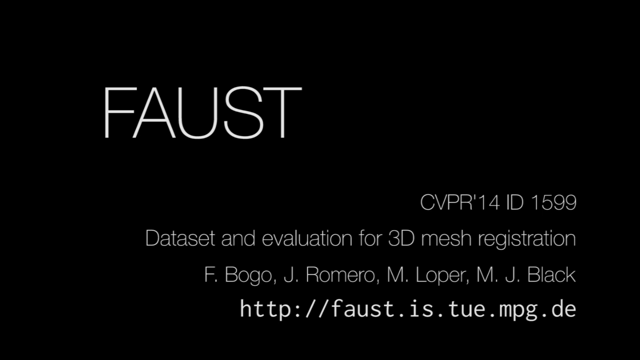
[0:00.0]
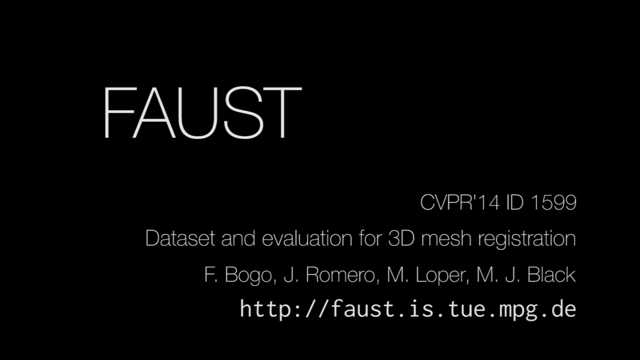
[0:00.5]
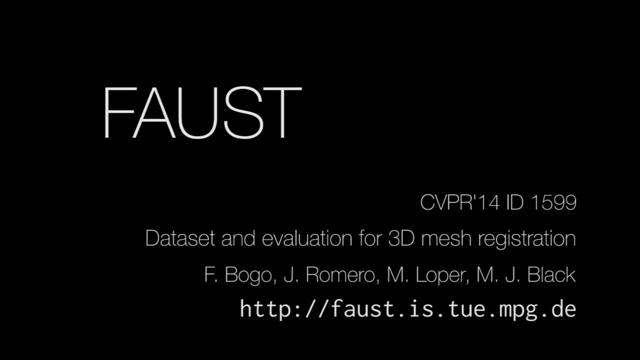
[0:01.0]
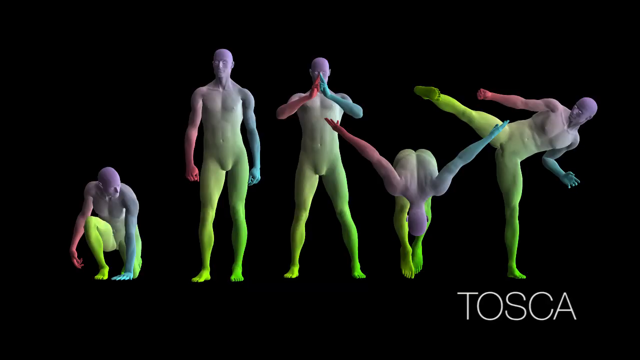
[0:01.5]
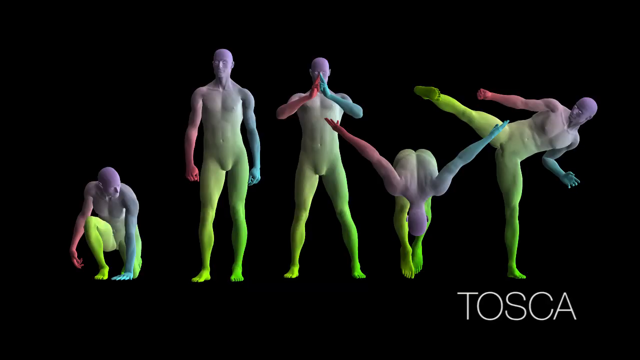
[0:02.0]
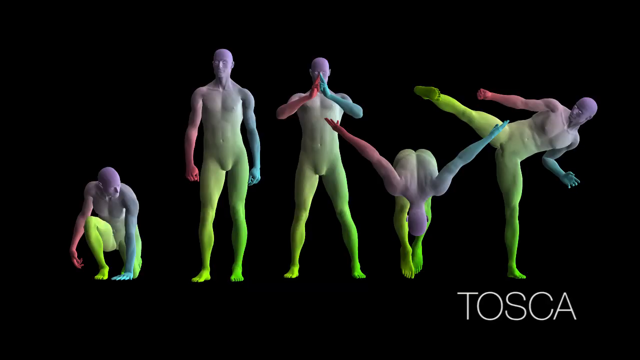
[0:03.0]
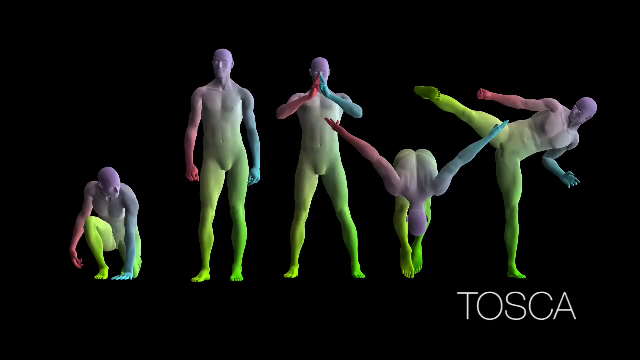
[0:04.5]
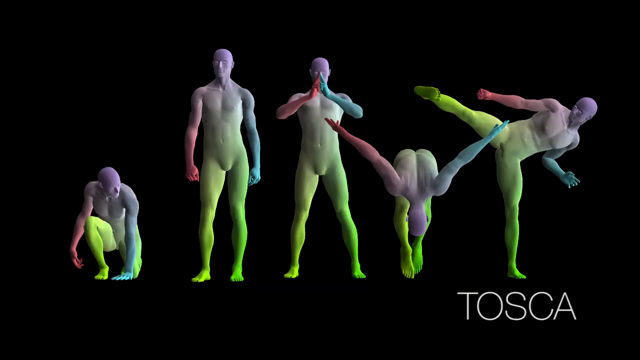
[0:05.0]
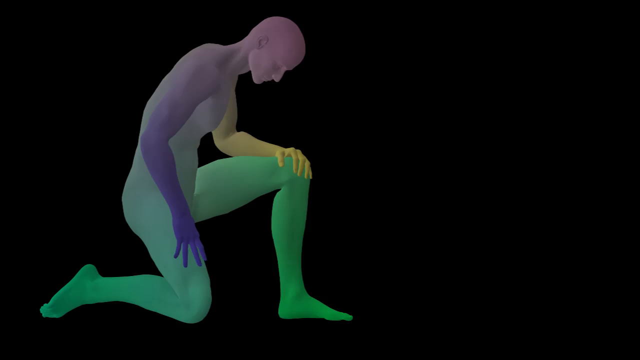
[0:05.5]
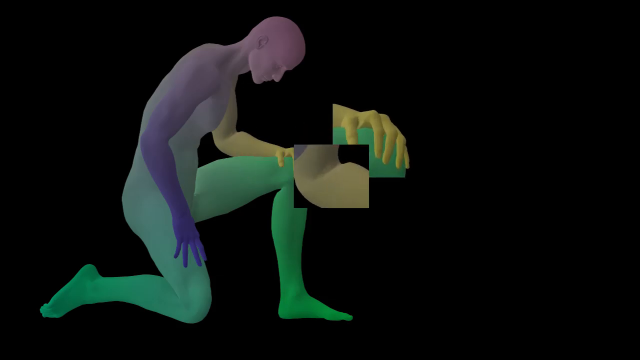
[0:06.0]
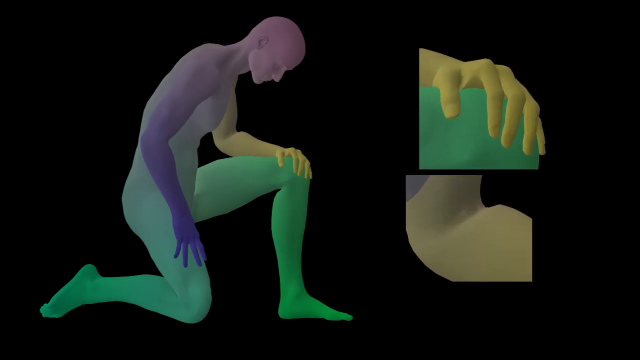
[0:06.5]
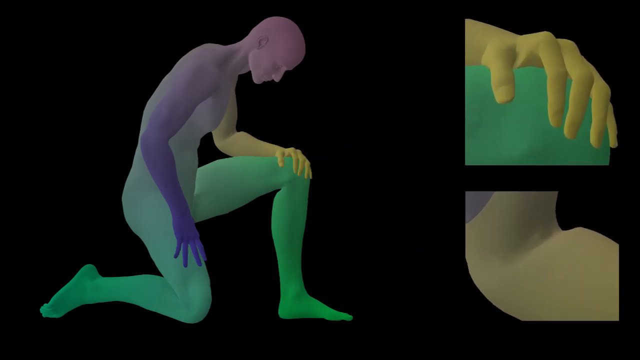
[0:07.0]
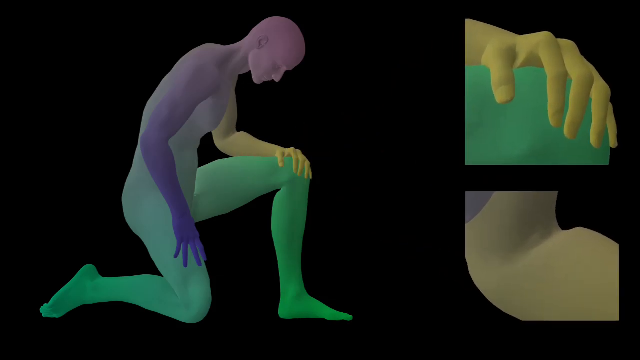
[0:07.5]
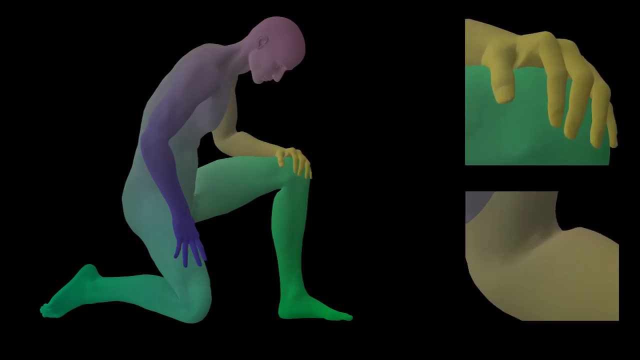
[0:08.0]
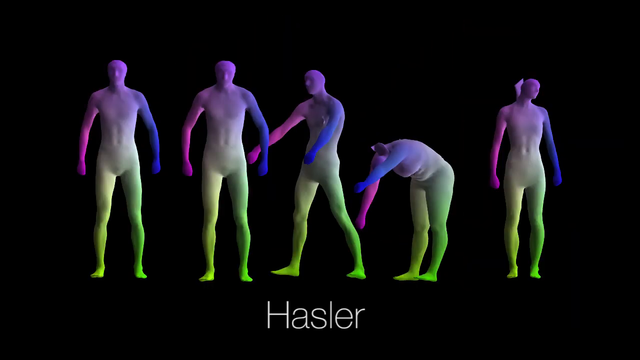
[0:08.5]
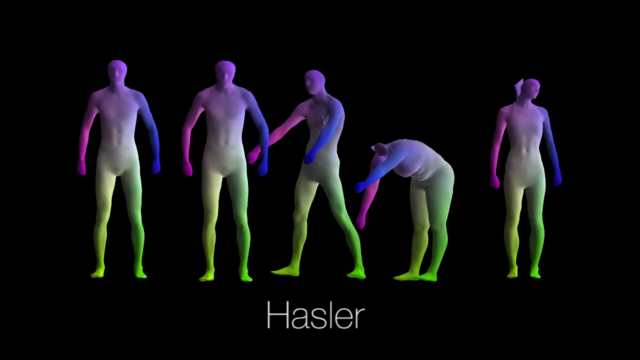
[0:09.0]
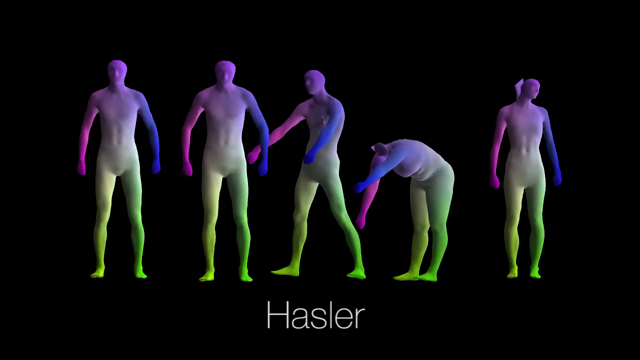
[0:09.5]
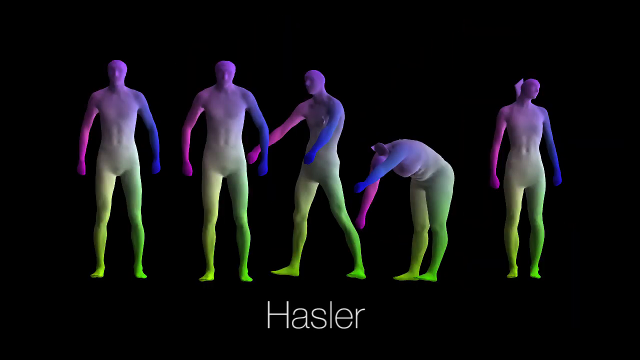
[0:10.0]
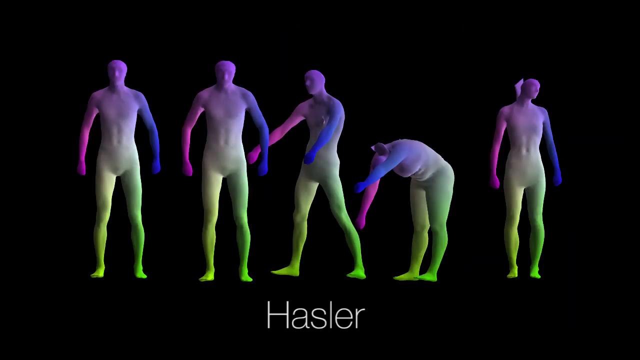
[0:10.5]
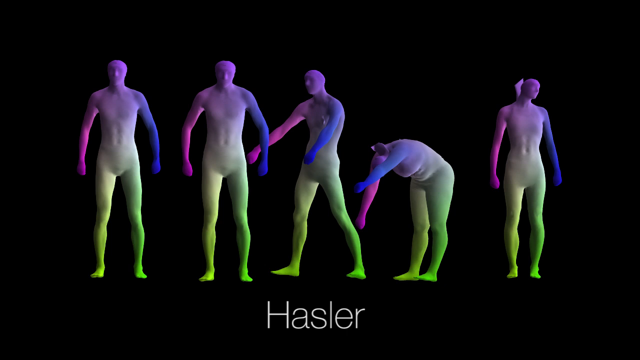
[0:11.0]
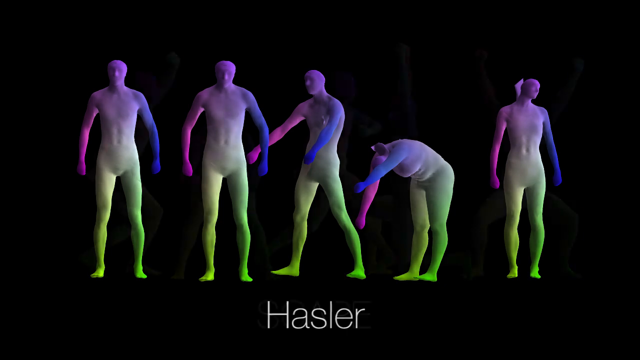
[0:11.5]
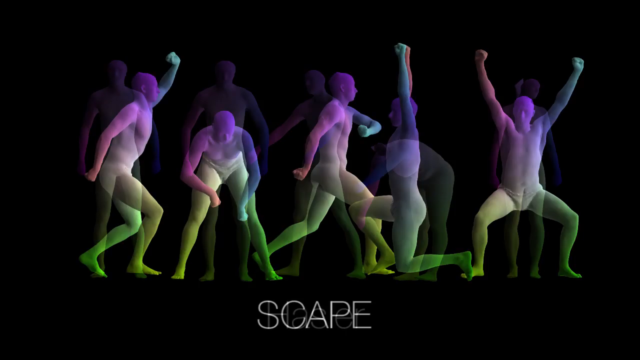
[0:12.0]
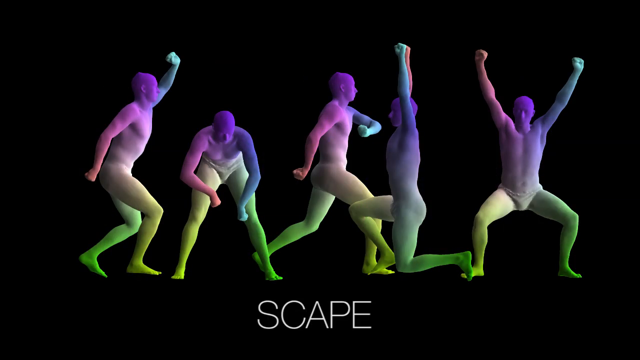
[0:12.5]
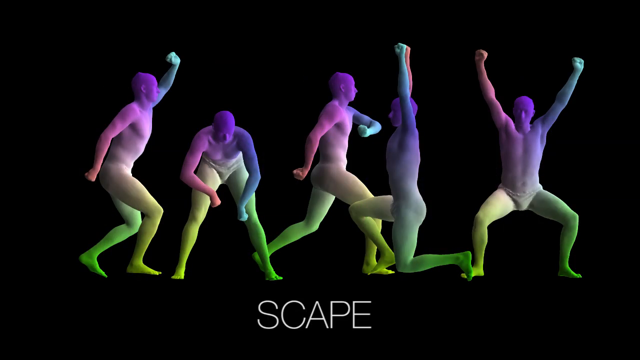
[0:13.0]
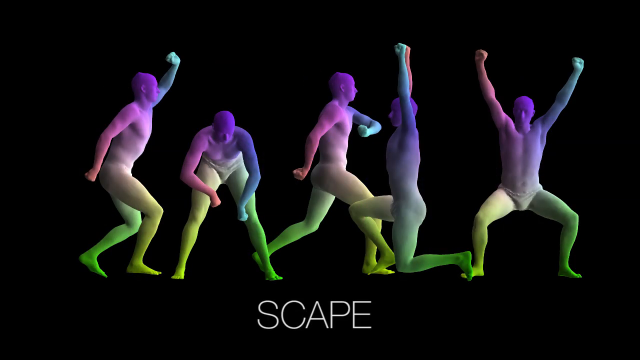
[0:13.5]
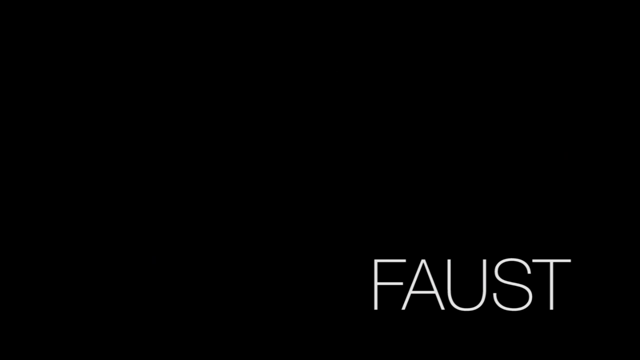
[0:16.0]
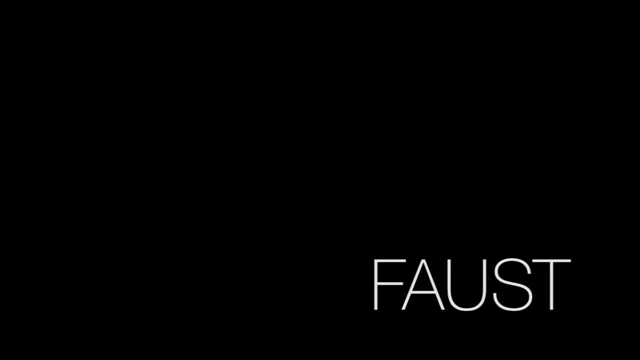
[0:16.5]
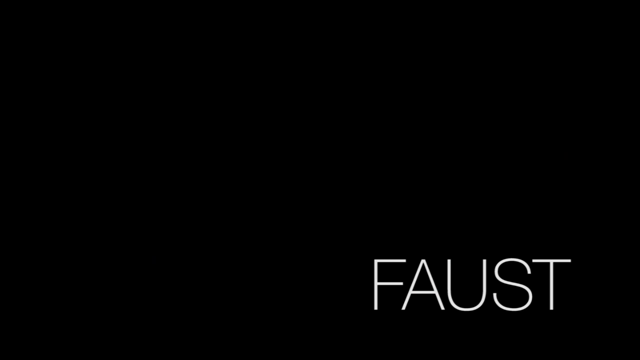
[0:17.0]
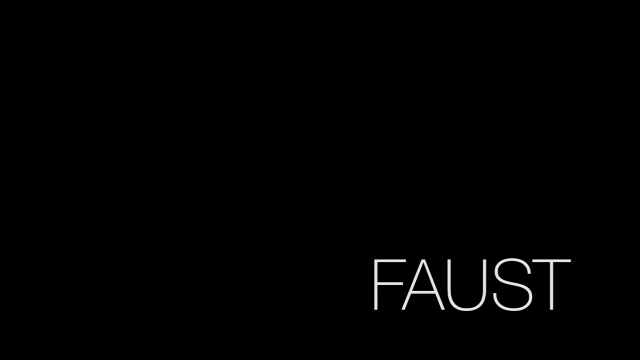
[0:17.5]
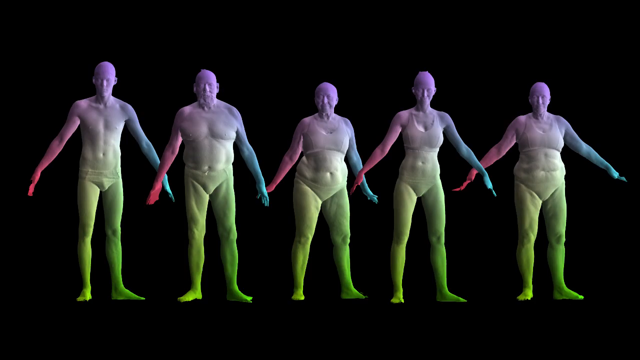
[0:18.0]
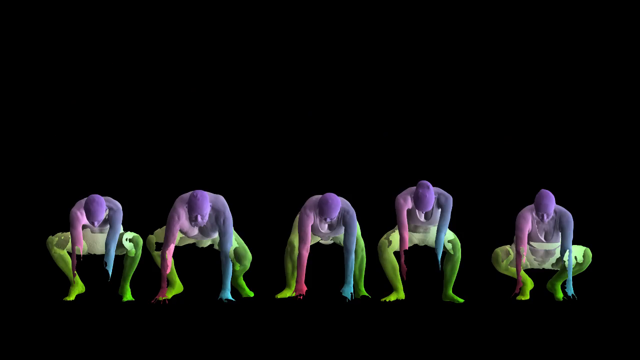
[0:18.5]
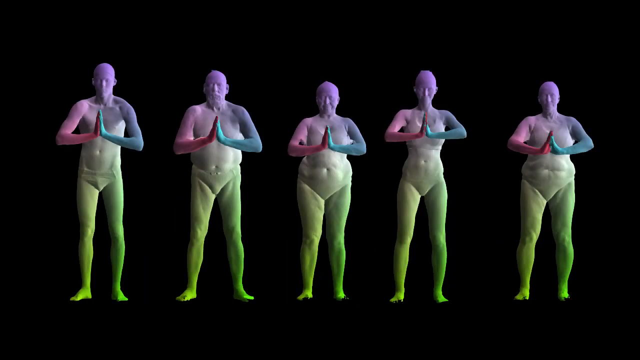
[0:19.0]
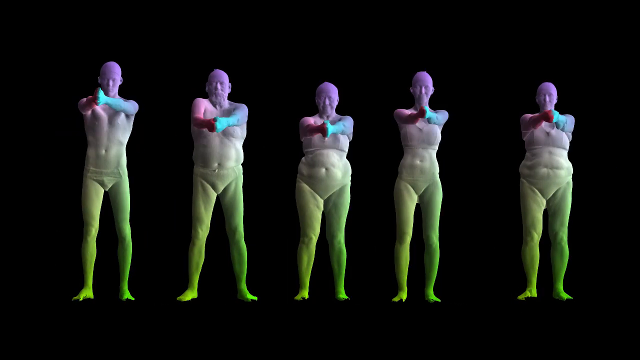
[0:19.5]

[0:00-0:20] Individuals perform different poses. The first leans toward the end of the surface with hands down and the right hand on top of the knees, facing down toward the left side. The one on the left side of this kneeling figure has his right hand behind him and his left hand in front of him, facing up. The one on the right side of the second has both hands in a praying position in front of his face. The fourth seems to be doing a back stand, with his left leg up in the air and his hands down. The last one seems to have his left foot up in a kicking-like position, with his back sideways and both hands up, balancing on his right leg. The background is black, and a written word reads "Tosca".